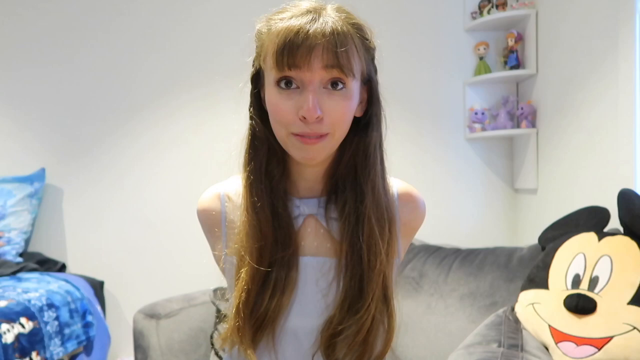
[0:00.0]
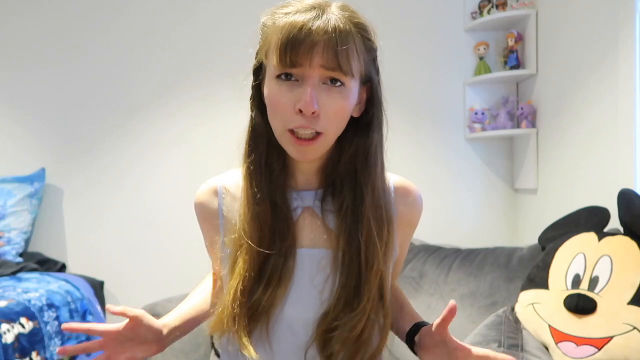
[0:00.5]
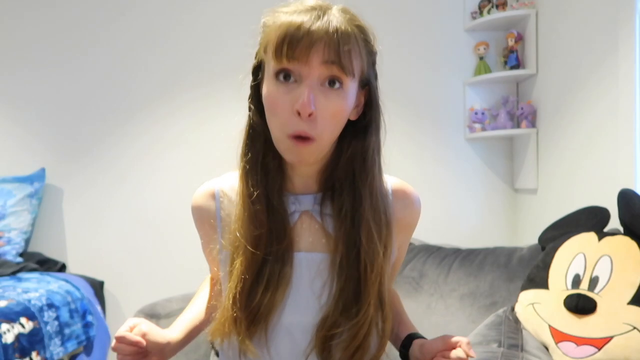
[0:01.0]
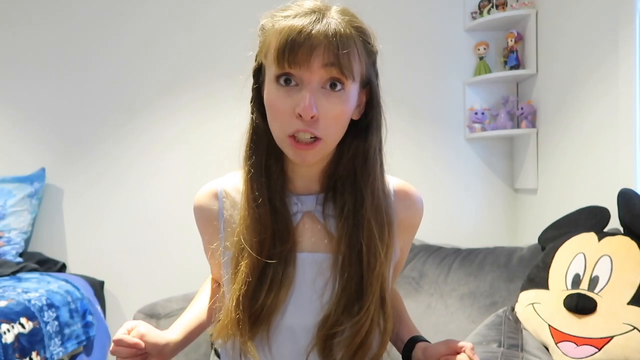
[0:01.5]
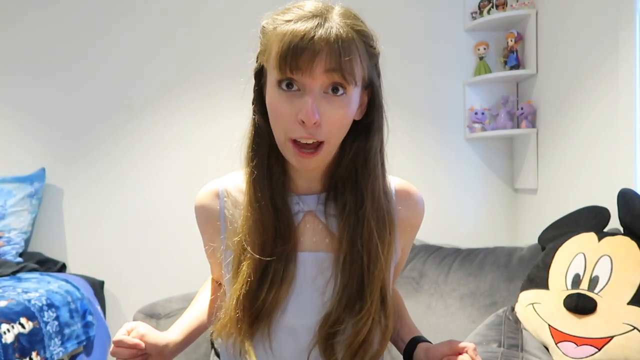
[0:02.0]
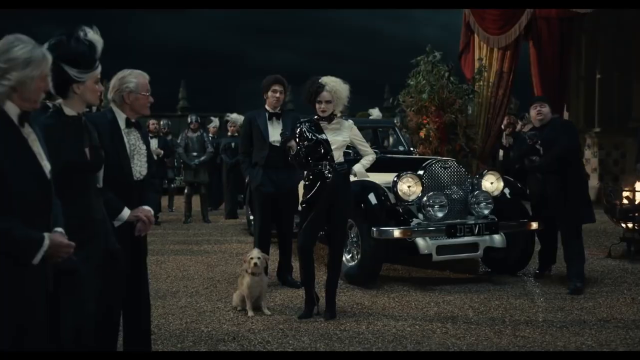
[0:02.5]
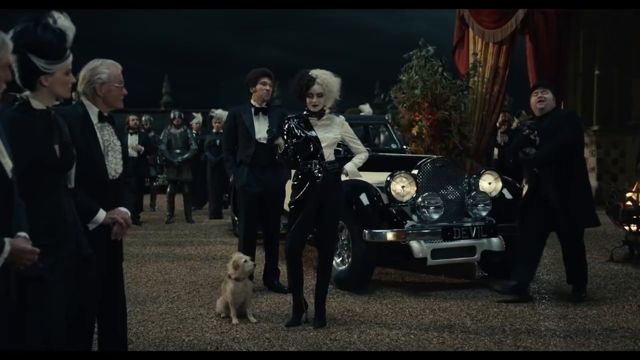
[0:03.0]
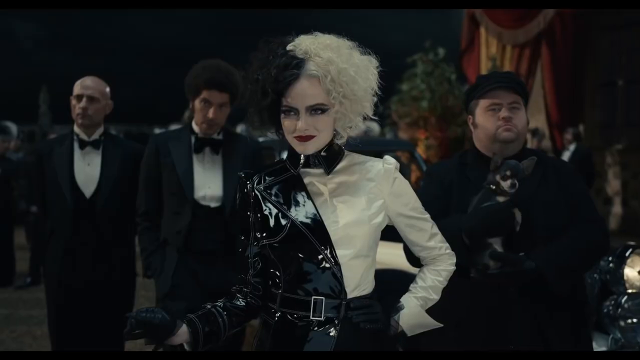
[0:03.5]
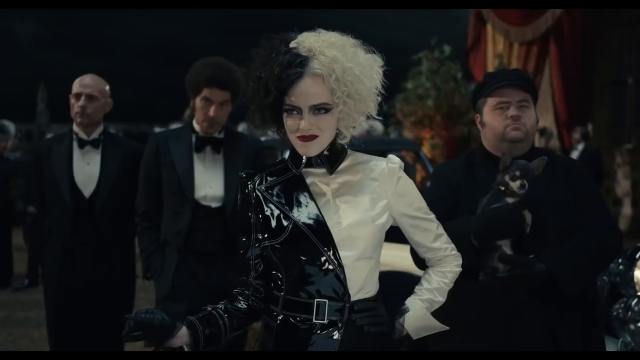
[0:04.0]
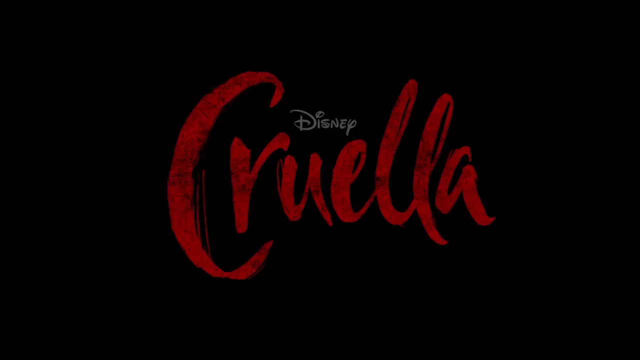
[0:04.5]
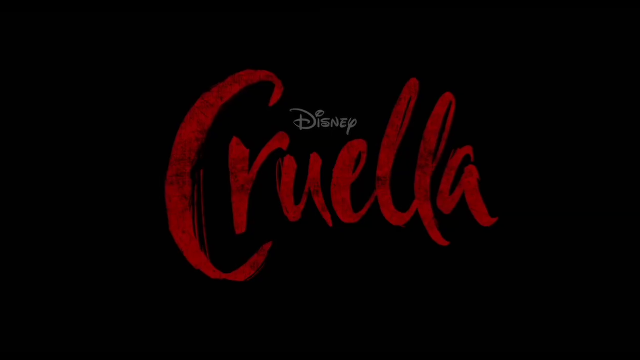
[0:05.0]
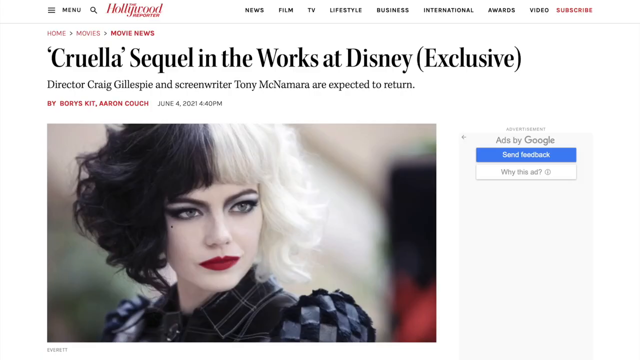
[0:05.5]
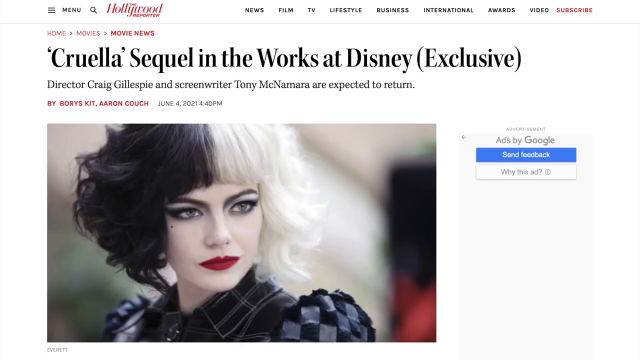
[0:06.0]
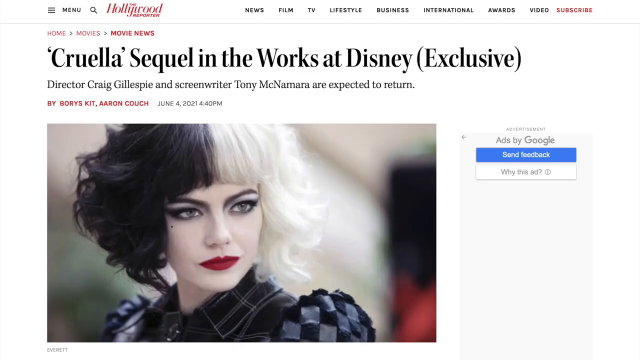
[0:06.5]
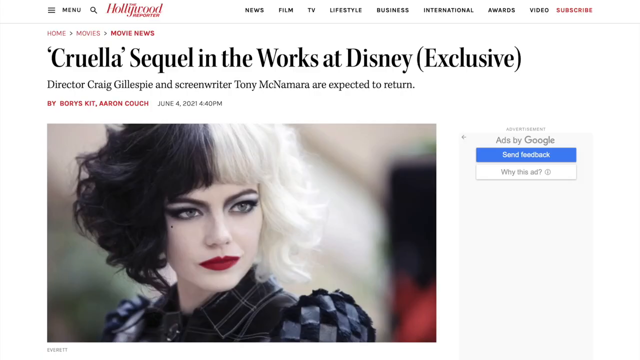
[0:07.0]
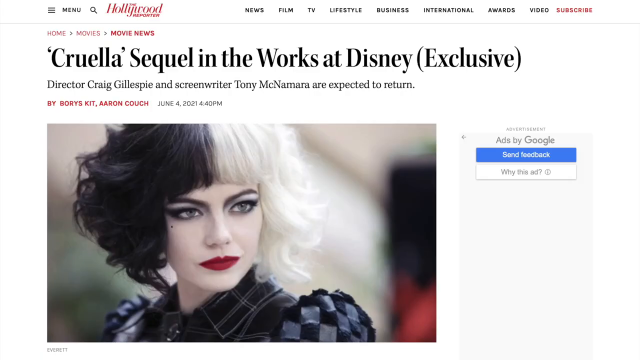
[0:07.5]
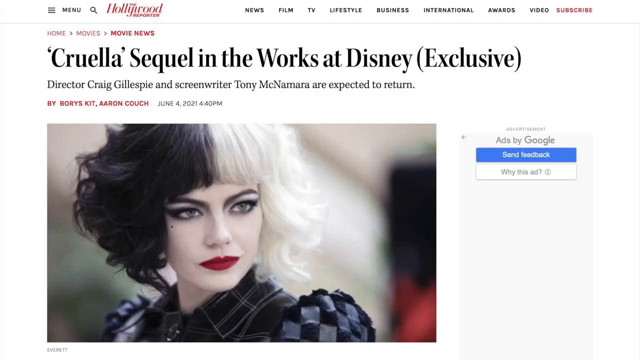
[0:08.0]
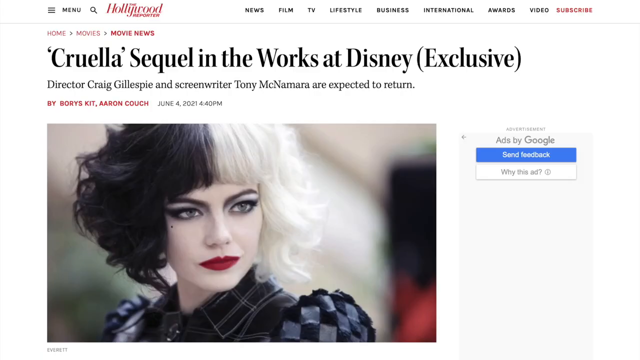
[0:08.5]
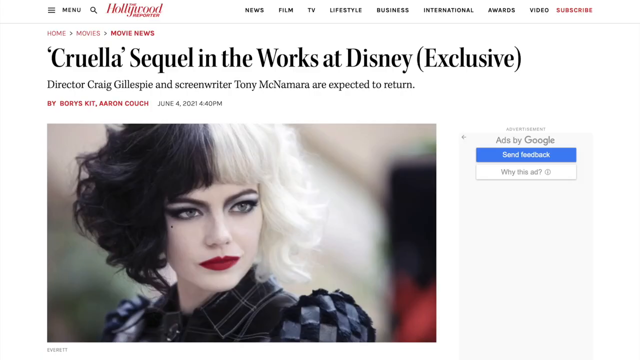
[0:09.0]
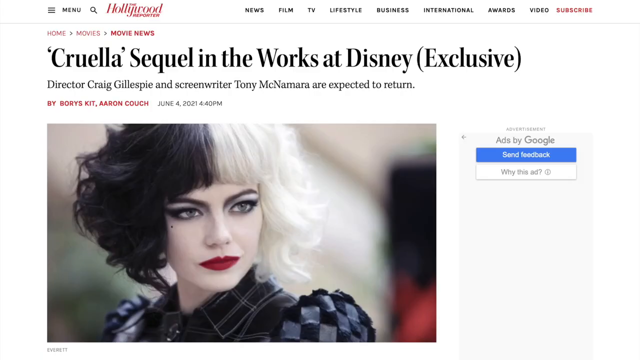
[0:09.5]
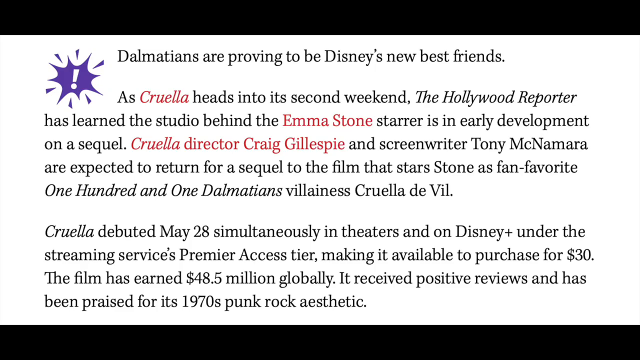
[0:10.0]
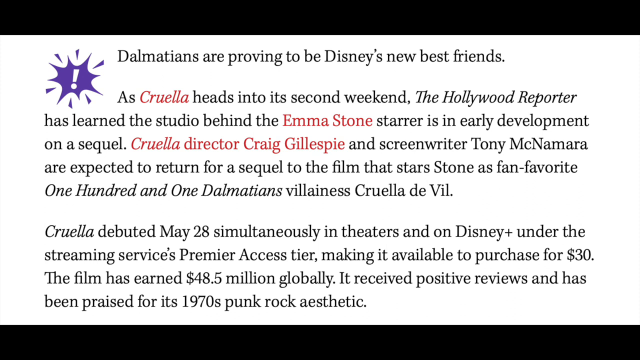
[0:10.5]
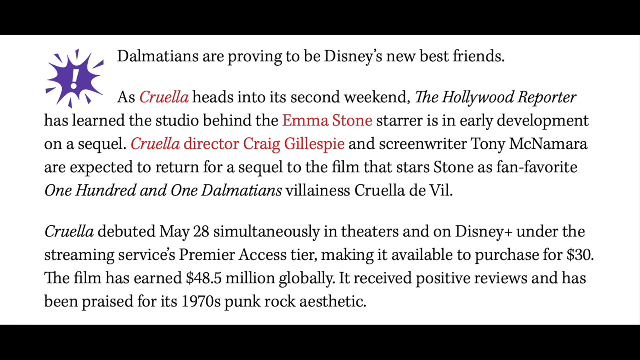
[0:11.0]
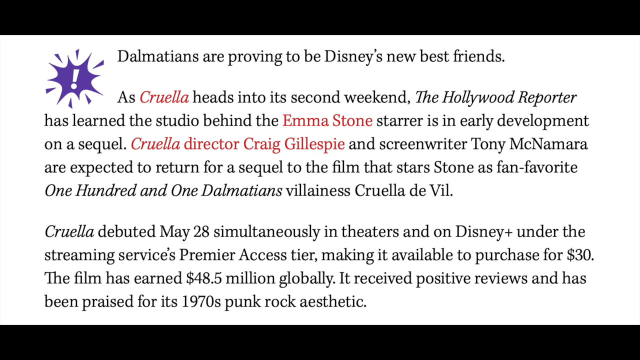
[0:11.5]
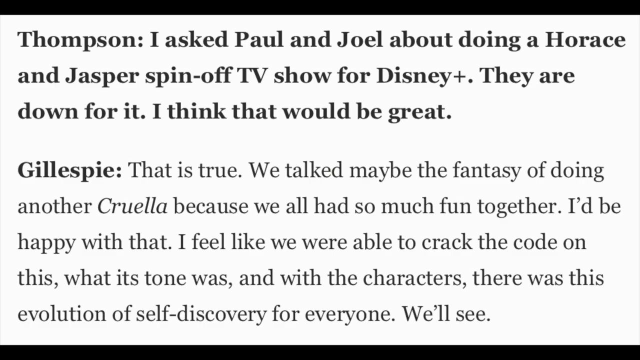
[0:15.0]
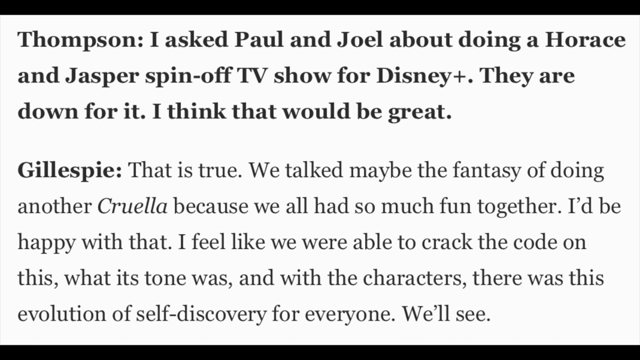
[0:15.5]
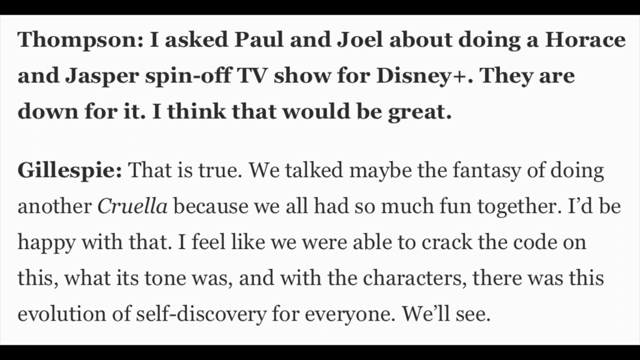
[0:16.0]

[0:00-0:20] A young woman sits in the center of the screen, apparently leaning forward a little, with a very excited look on her face. Her very long hair, well past the center of her chest, hangs across the front. Her arms are behind her back, so it looks like she has no arms. Behind her is a Mickey Mouse pillow on a grey couch, and a few figurines are on a little corner stand in the top right corner. Her bed has blue covers. Her arms come out from behind her and her hands pop up slightly to the side, her elbows still bent at more than 90 degrees. She makes a very animated, excited face with her fingers out. The scene changes to an image of Cruella DeVille standing with her hand on her hip, white hair on one side and black hair on the other, and a rather smug look on her face. Her outfit is also black and white, and "Cruella" is written across the screen. A Hollywood Reporter page then appears that says "Cruella sequel in the works at Disney," marked as an exclusive. Another page says "Dalmatians are proving to be Disney's new best friend as Cruella heads into the second weekend," and states that the film has already earned $48.5 million globally.